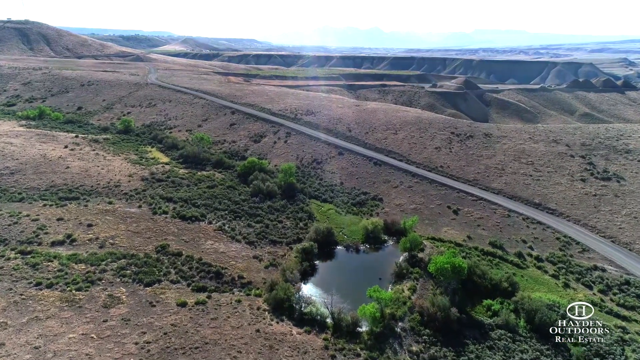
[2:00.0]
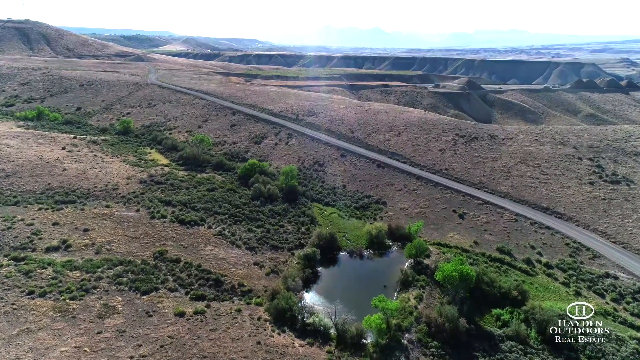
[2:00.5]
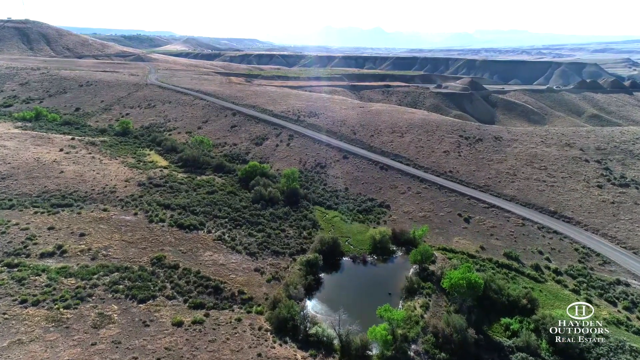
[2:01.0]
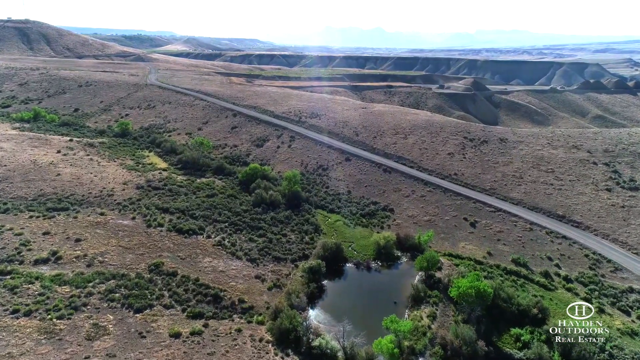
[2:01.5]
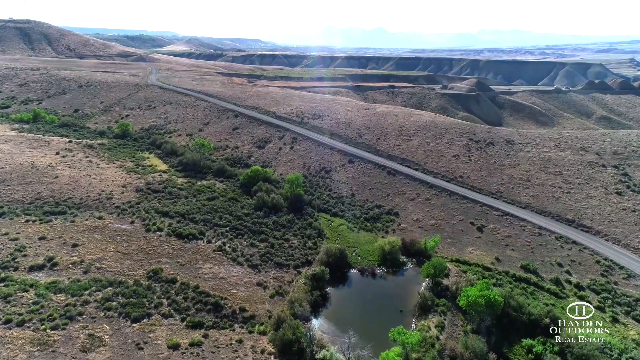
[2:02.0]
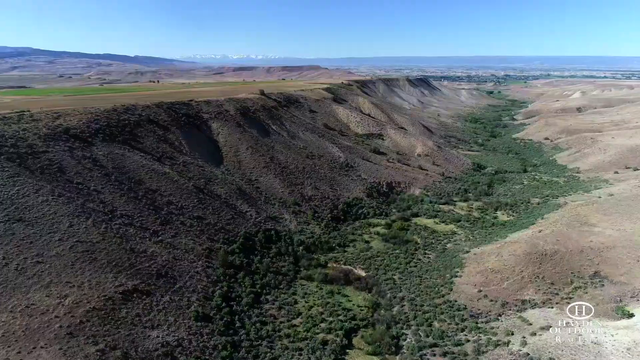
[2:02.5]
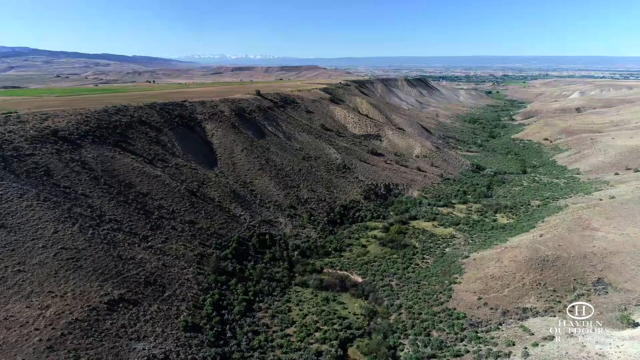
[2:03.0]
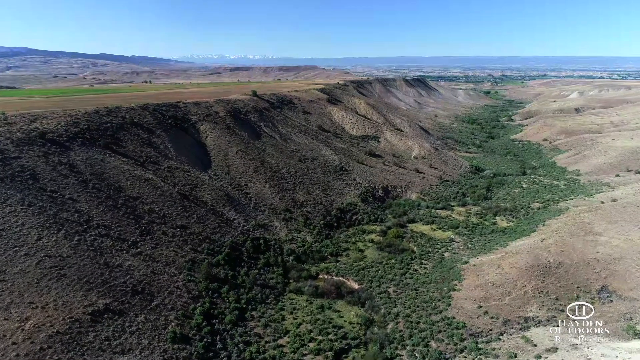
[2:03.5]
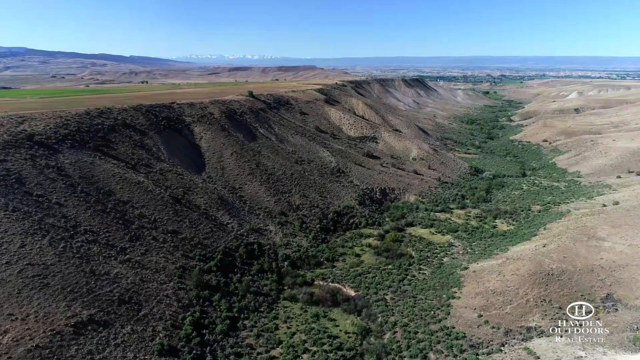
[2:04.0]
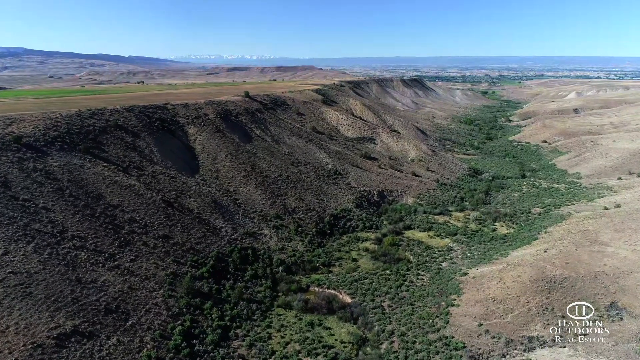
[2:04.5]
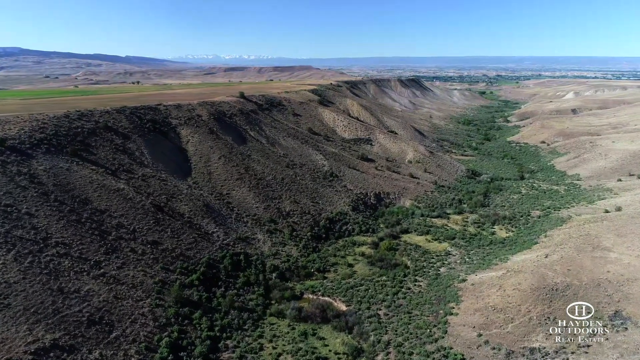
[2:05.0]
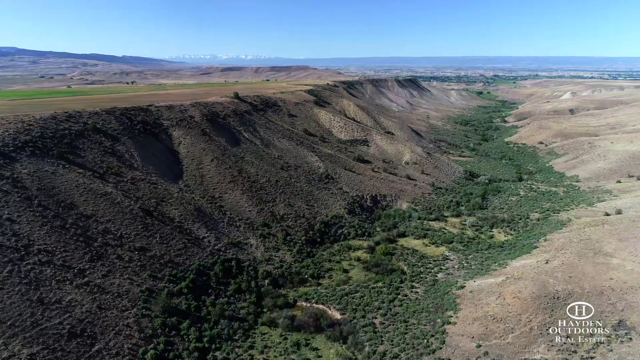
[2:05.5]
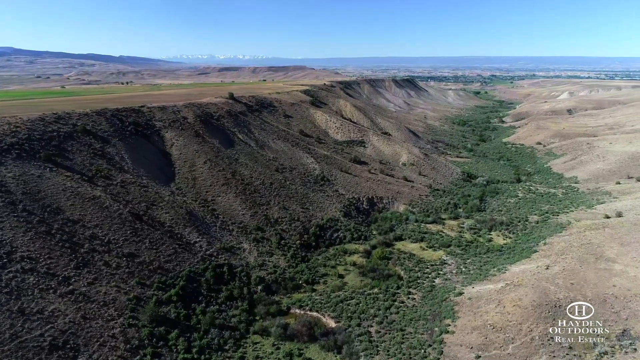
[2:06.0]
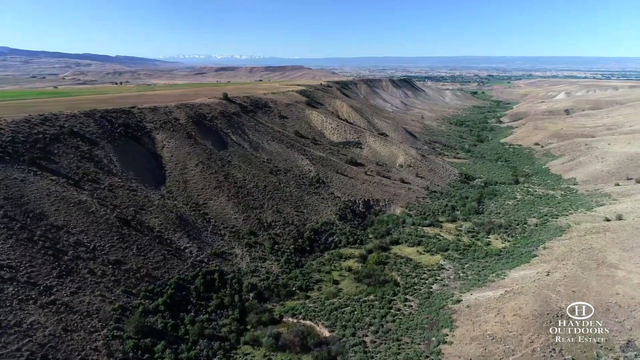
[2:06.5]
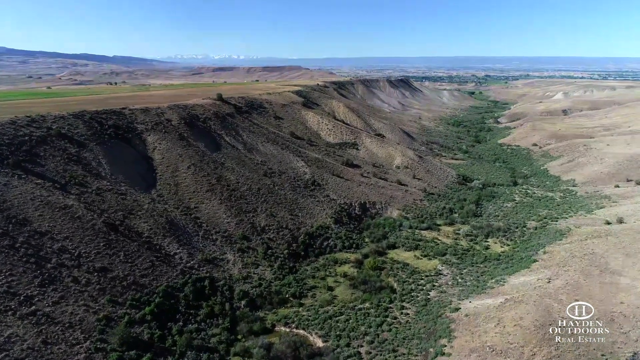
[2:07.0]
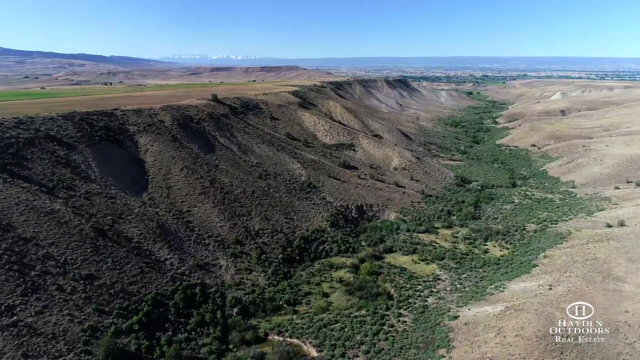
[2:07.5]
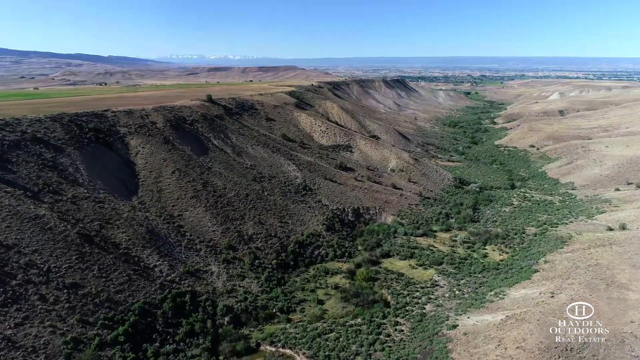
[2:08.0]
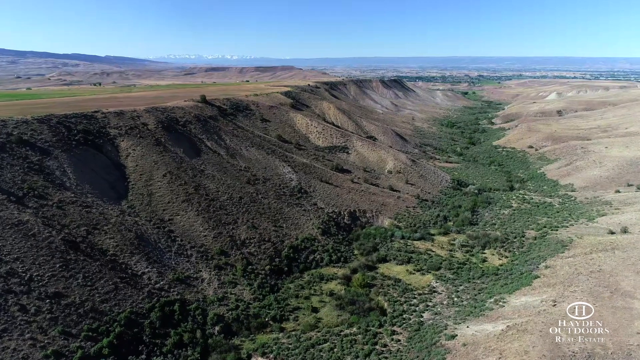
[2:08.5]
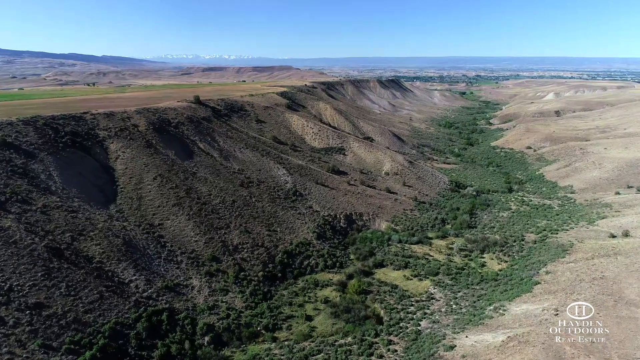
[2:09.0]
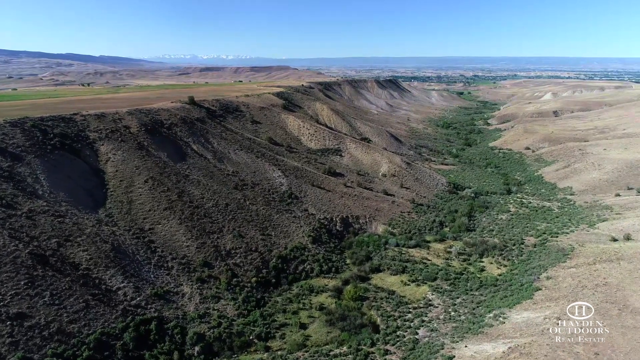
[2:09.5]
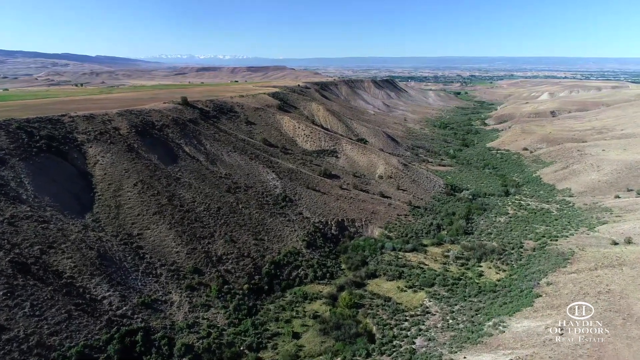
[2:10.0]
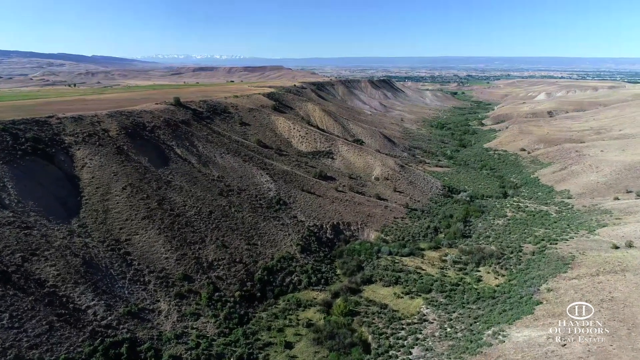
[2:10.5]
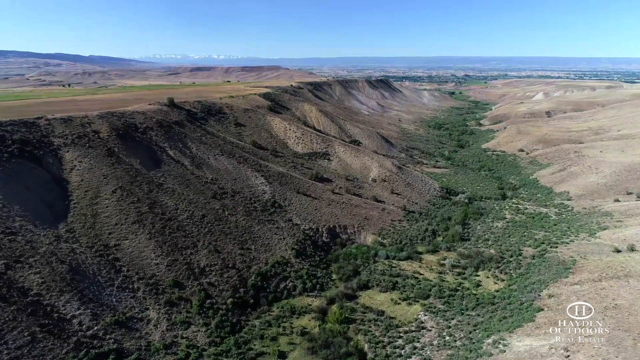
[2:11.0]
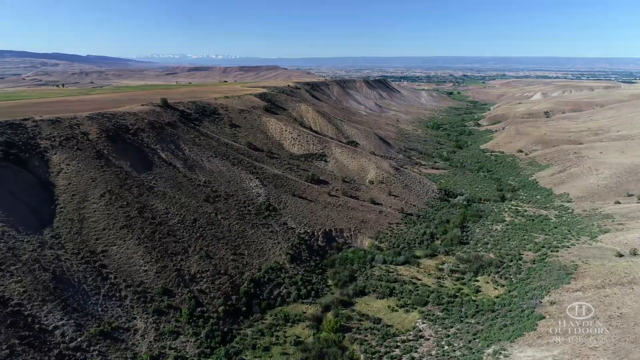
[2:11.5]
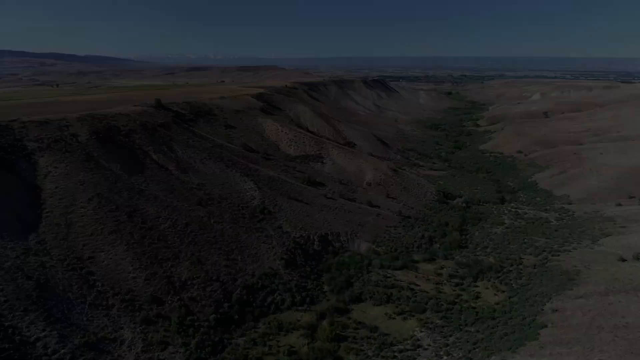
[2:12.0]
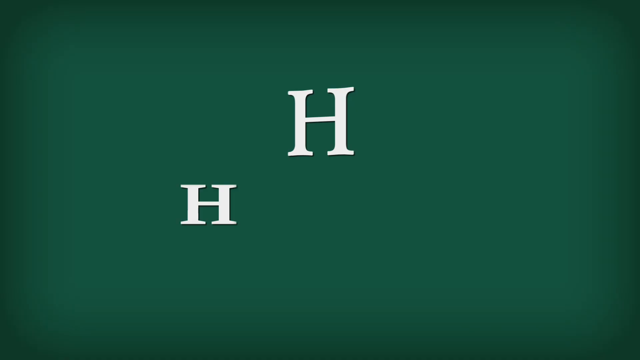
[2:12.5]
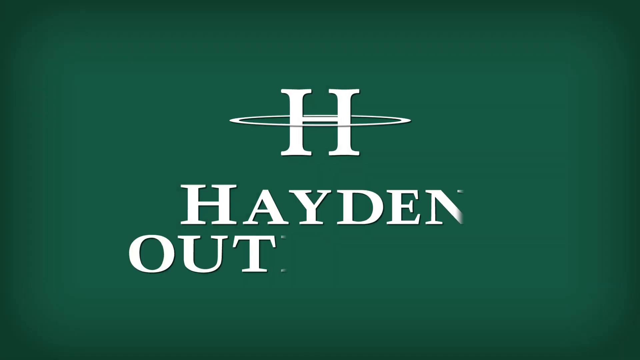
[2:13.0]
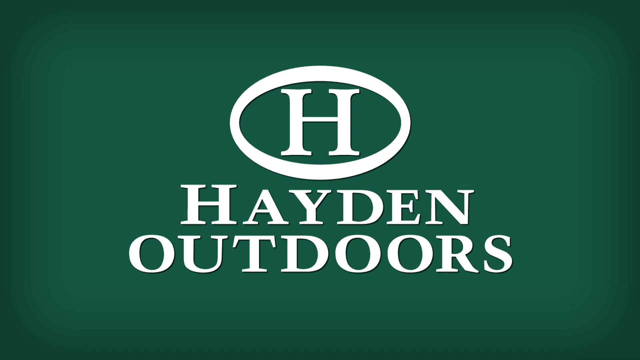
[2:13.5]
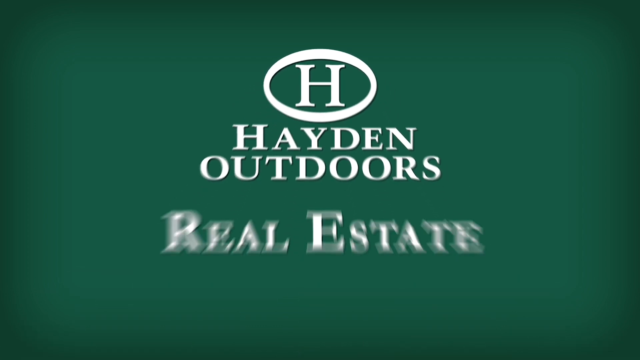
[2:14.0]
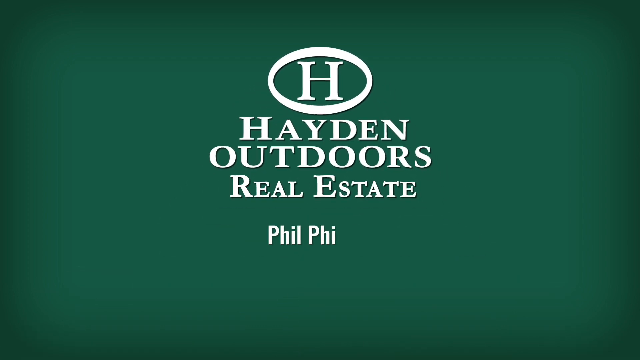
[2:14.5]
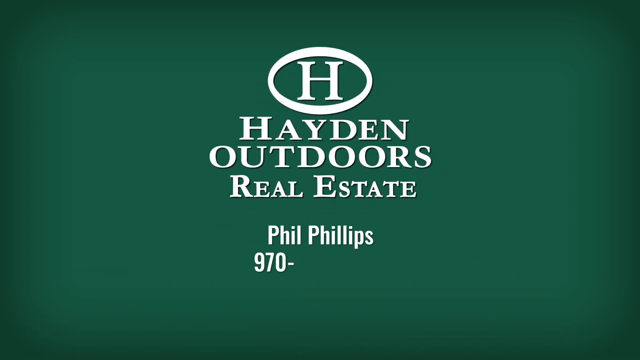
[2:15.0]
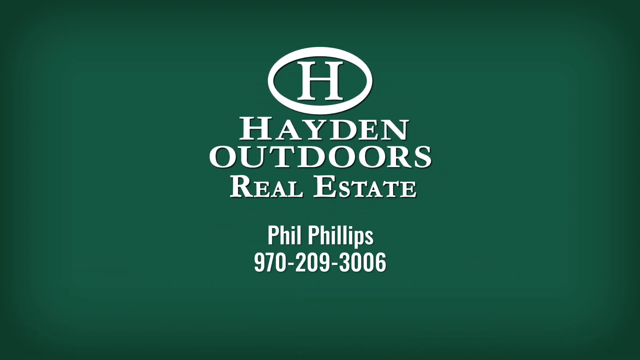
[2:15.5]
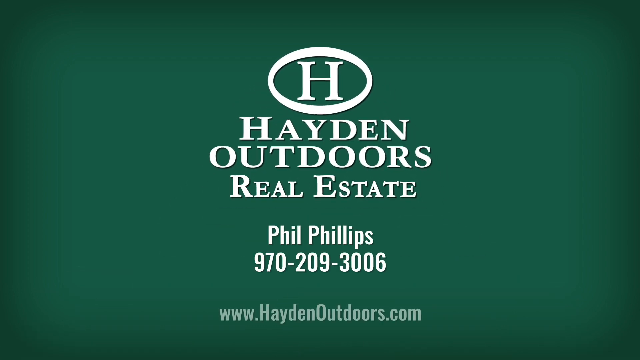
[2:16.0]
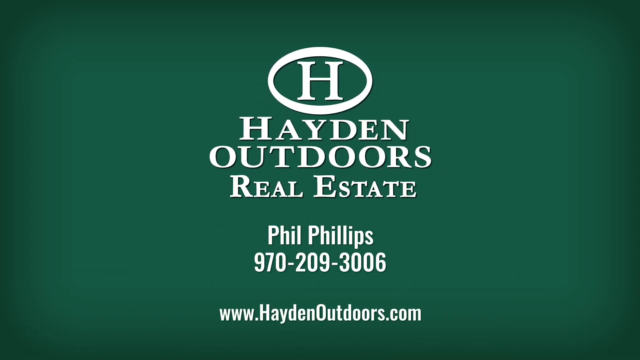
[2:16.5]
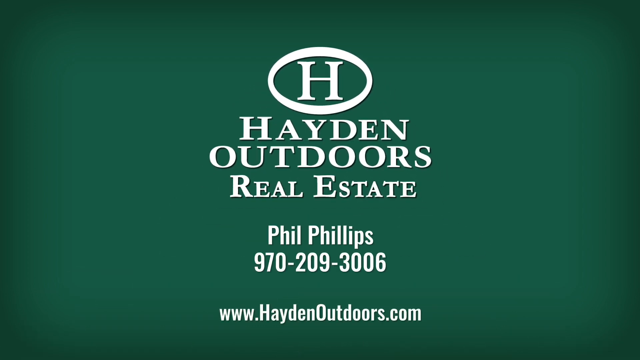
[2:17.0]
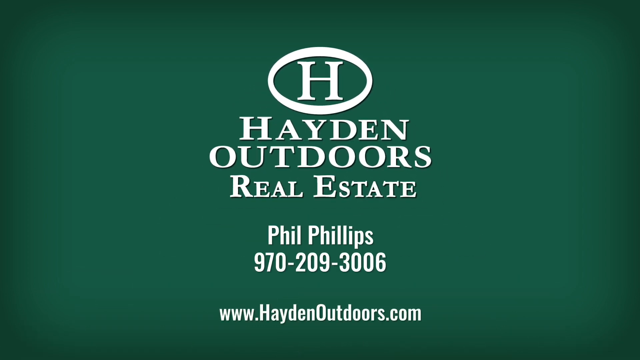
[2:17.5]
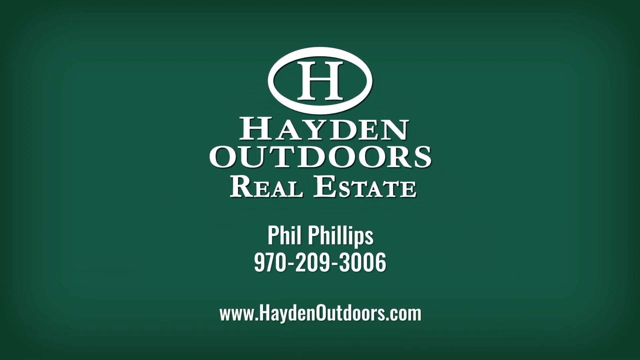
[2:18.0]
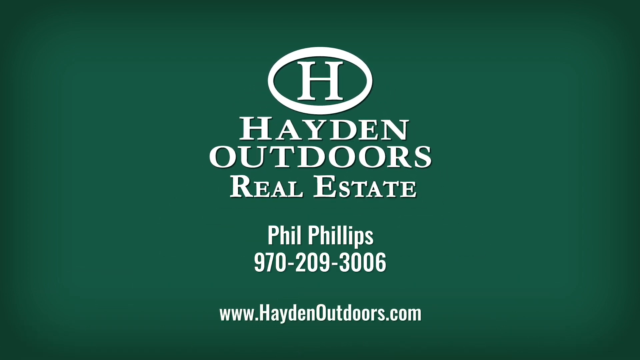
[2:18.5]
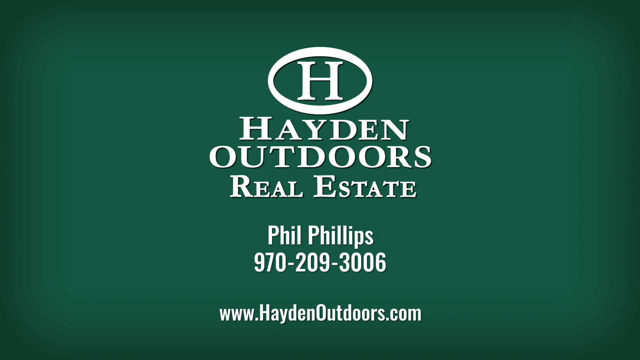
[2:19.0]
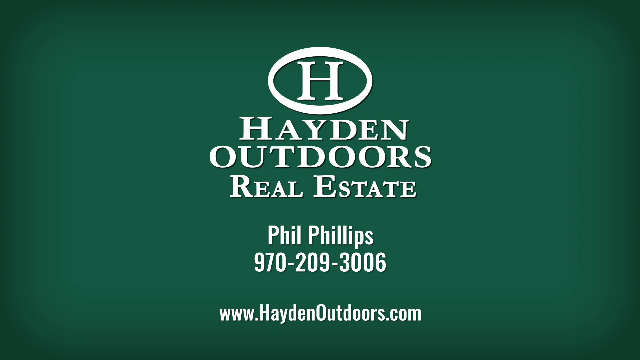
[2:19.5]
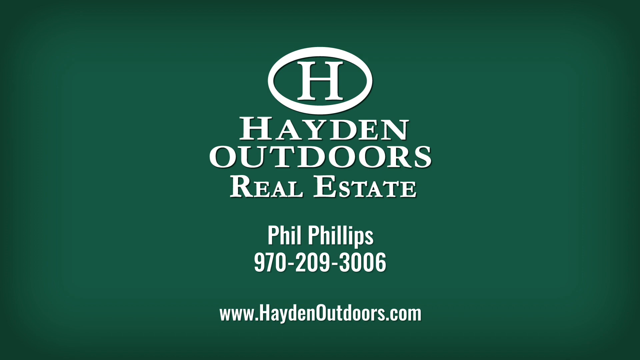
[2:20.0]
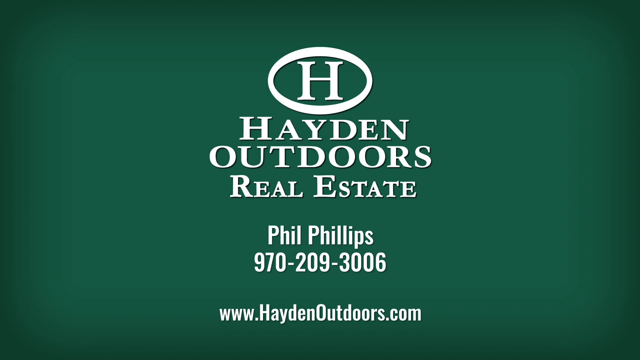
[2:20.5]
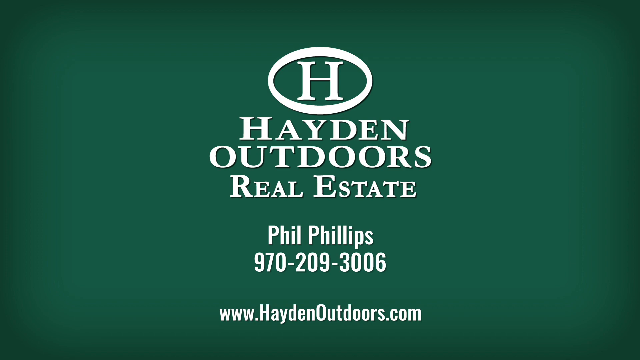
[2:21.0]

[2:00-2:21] The aerial shot of the little pond with the dirt track on the right-hand side continues, followed by a shot very similar to an earlier one: a sloping mountainside with green, ravine-like undergrowth beneath it and brown, dry fields just further to the right. The video fades to black, and an end screen appears with a dark forest green background and the logo, an H inside a white circle. All the text is white; underneath it reads "Hayden Outdoors Real Estate", "Phil Phillips", his phone number "970-209-3006", and his website "www.haydenoutdoors.com". This stays on screen for roughly 5 or 6 seconds, and then the video cuts to black as it ends.